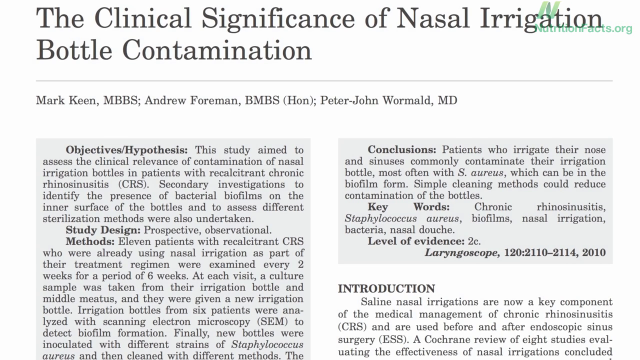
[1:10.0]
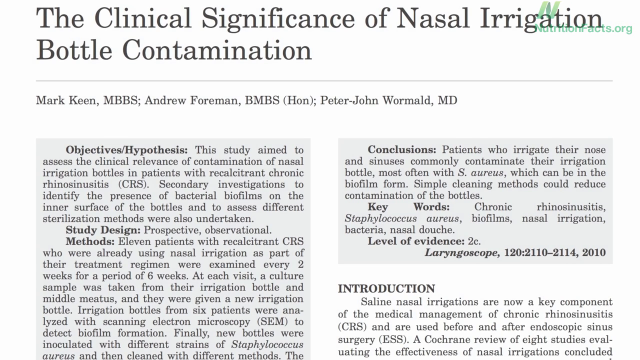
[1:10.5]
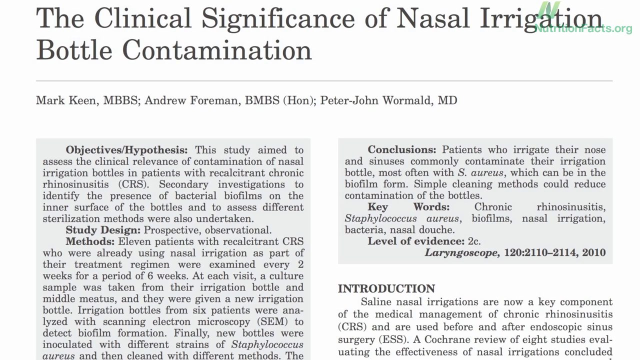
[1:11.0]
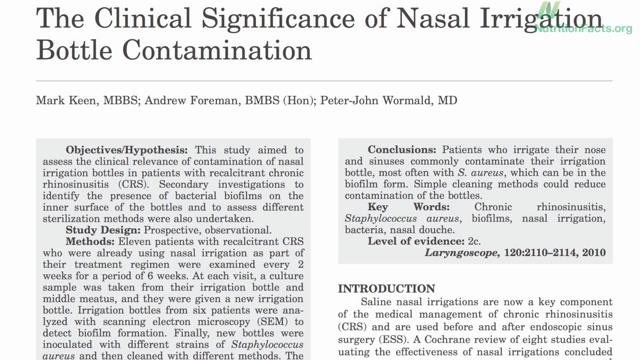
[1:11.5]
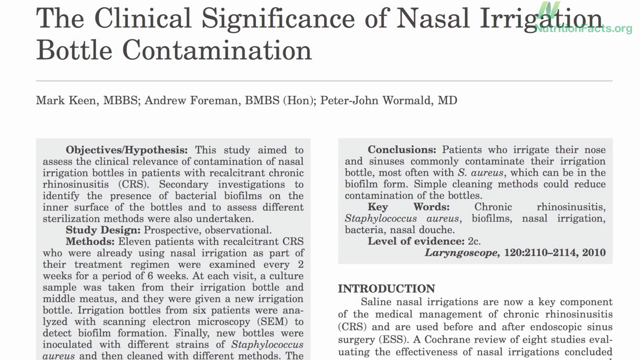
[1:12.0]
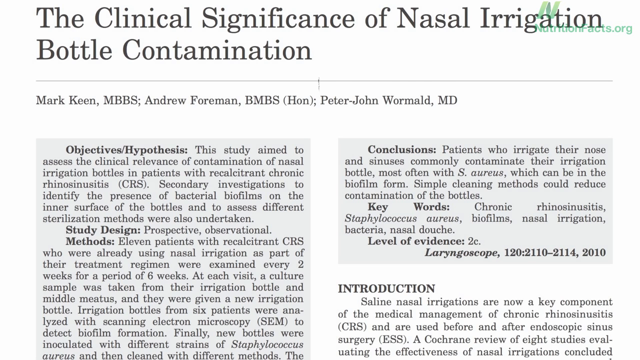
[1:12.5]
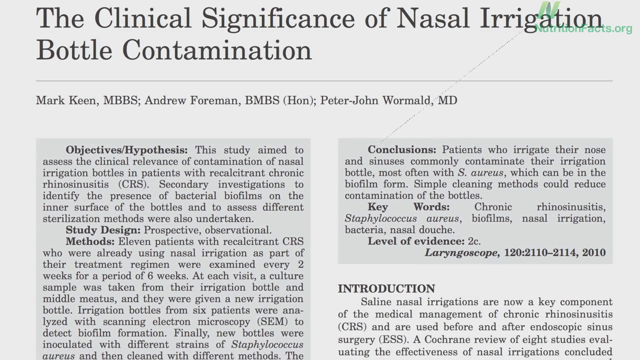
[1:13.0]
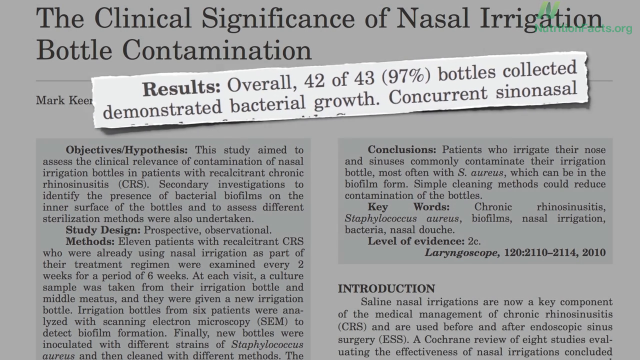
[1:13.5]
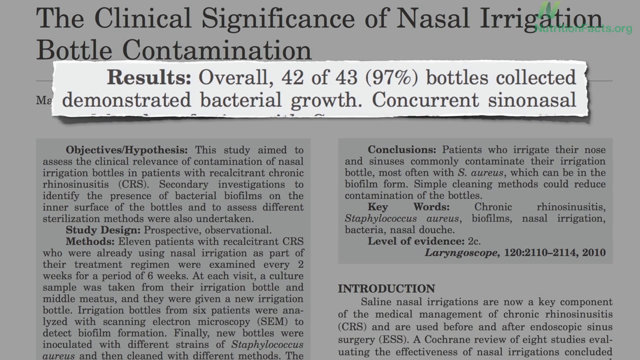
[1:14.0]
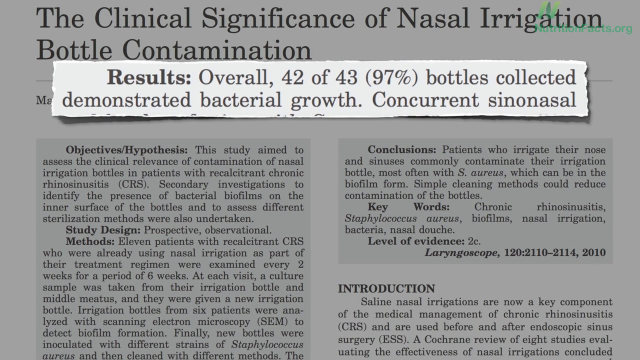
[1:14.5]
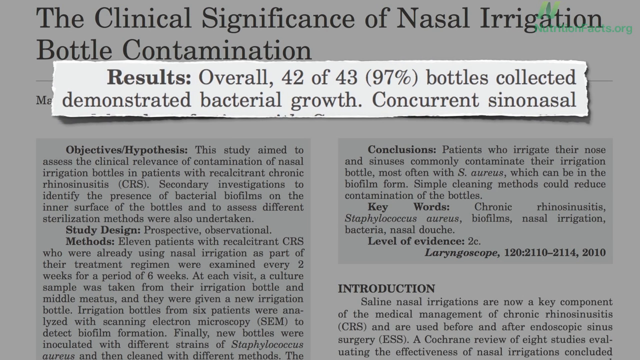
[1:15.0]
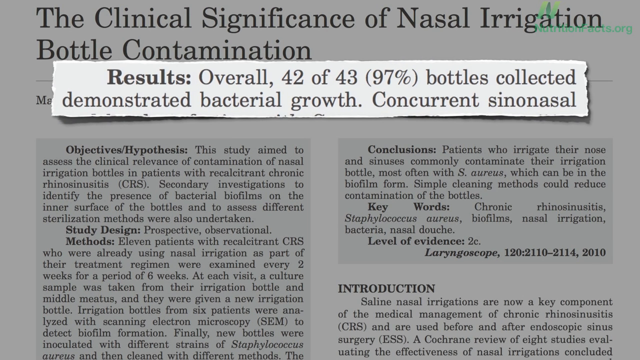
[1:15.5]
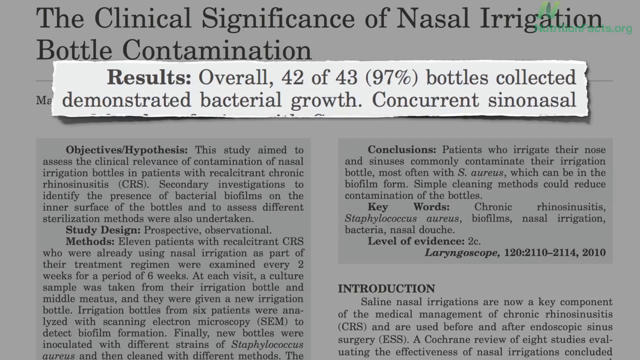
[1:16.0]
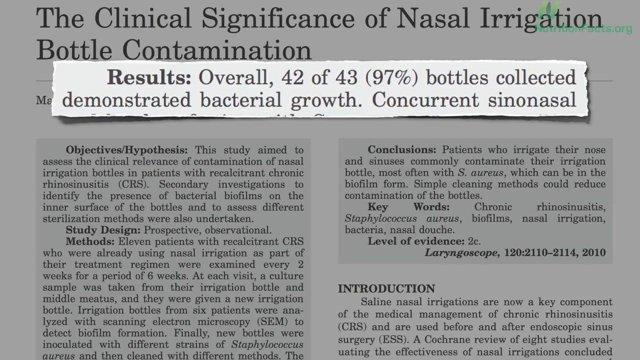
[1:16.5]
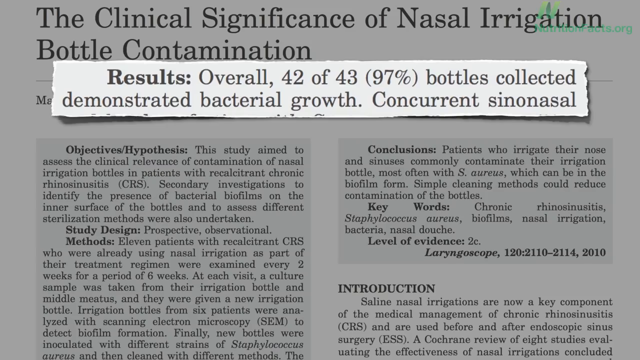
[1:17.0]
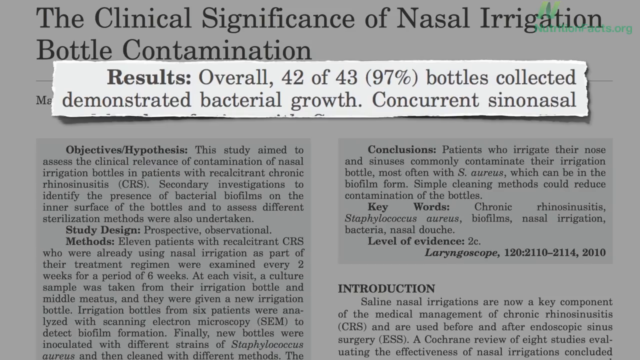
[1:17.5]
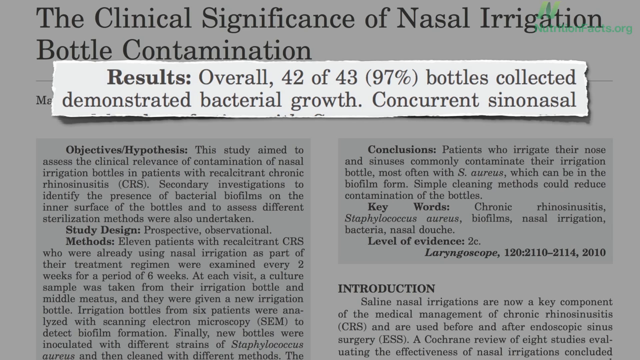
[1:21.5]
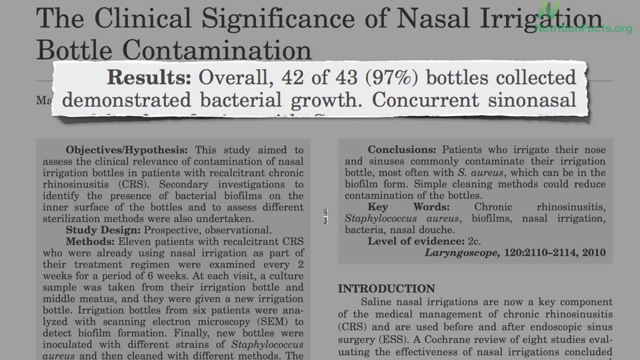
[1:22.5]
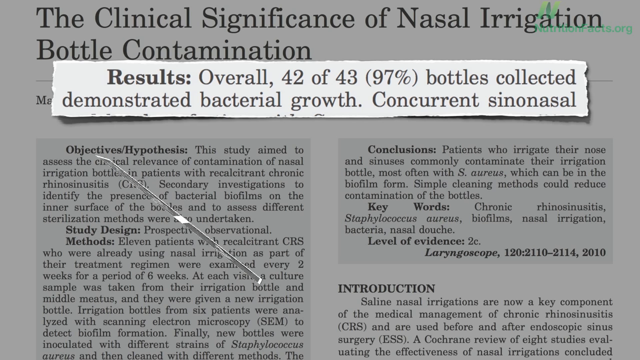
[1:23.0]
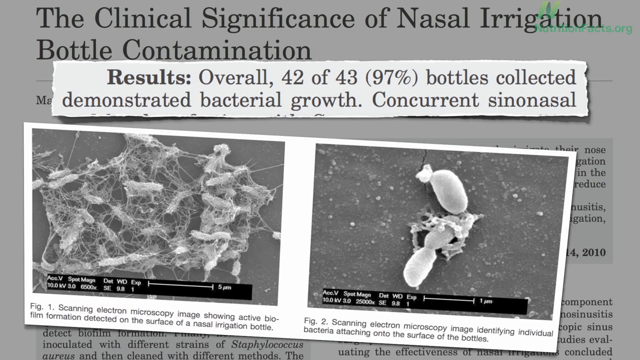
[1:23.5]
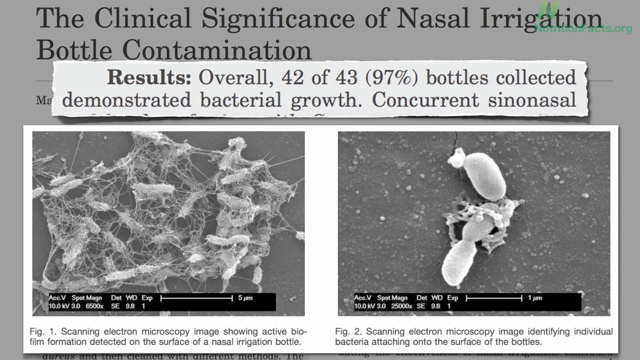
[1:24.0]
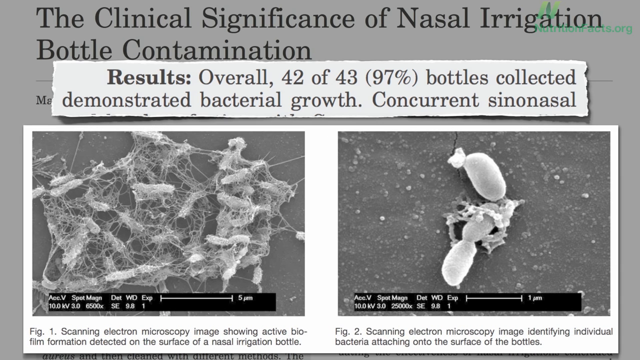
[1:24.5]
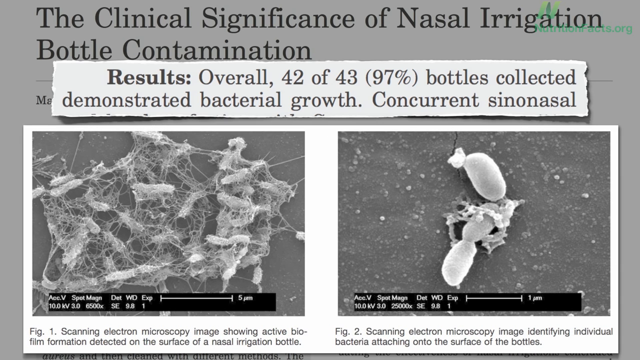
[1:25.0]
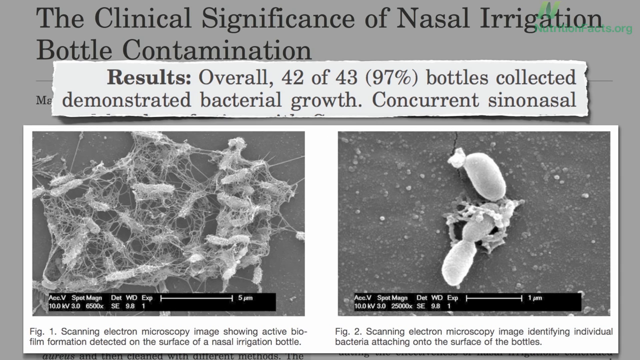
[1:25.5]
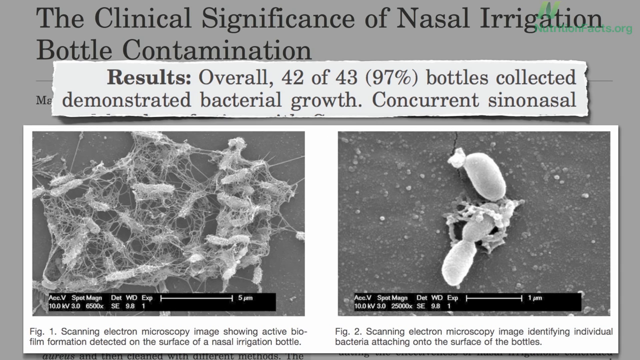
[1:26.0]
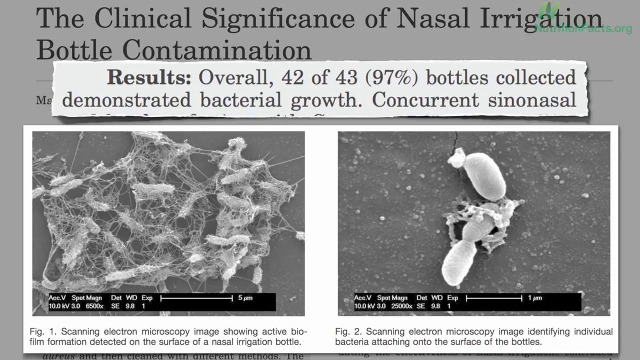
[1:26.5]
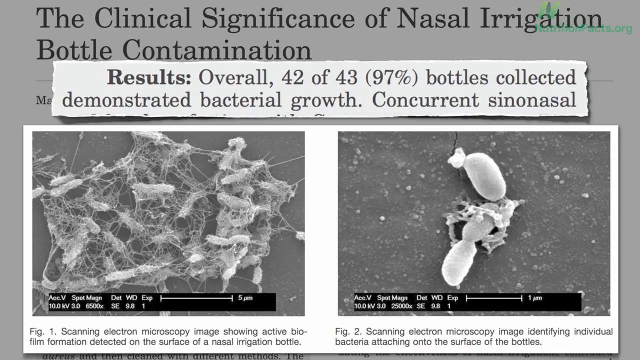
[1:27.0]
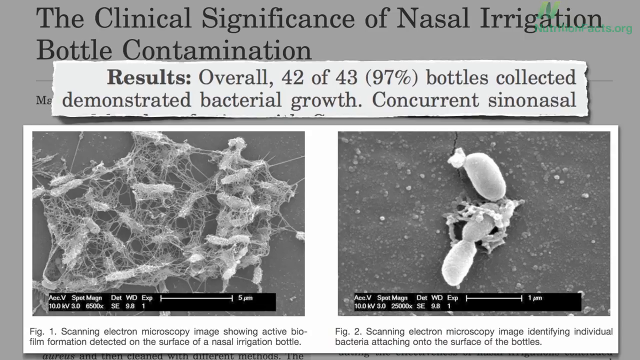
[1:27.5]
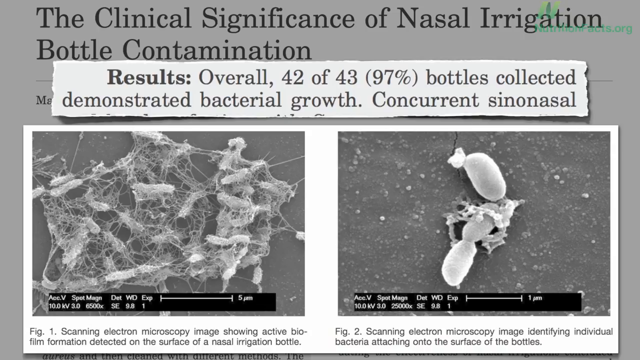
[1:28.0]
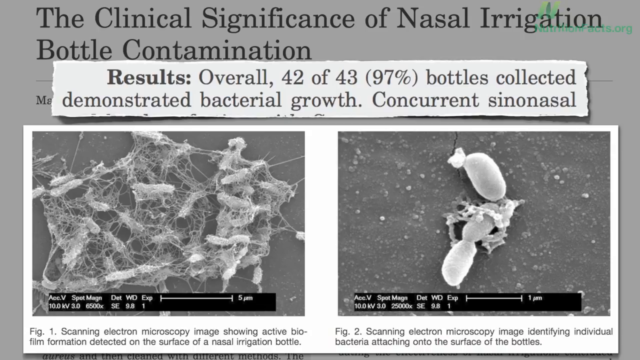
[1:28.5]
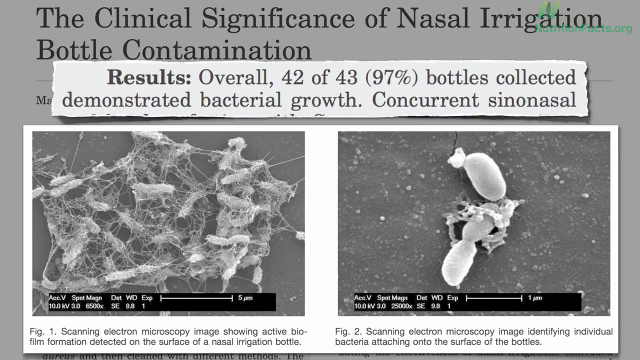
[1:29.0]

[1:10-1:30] A black and white image of a document about a medical study is shown, titled "The Clinical Significance of Nasal Irrigation Bottle Contaminants". It is the first page, formatted into two columns. After several seconds, a clipping pops up. It has a shadow on either edge, appearing to sit off the other paper, and slightly jagged edges on either side, appearing to have been cut or torn. When it appears, the story in the background is grayed out to focus on the clipping, which reads "Overall 42 of 43 bottles collected demonstrated bacterial growth". Shortly after, another clipping appears with two black and white images: the image on the right is of bacteria forming a biofilm, and the one on the left is of a single bacteria. Both are shown under an electric microscope and have captions underneath.